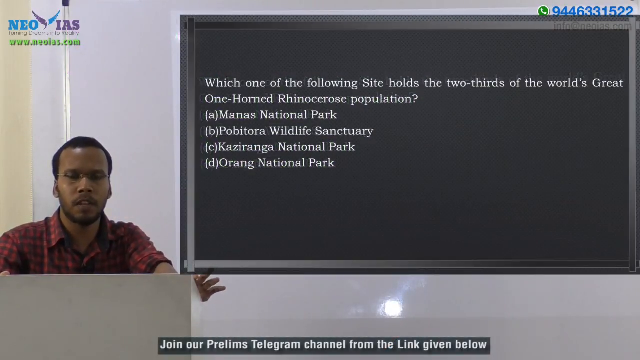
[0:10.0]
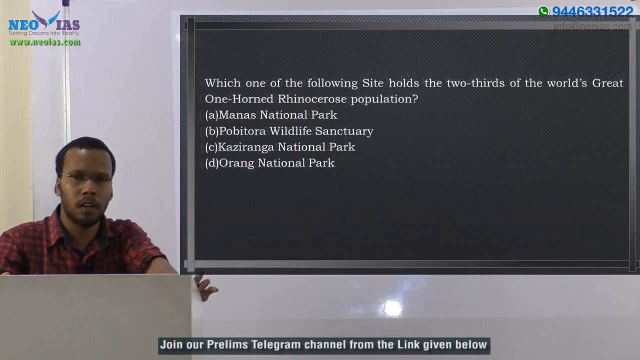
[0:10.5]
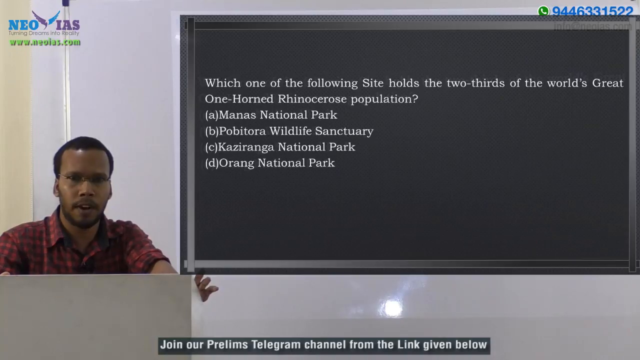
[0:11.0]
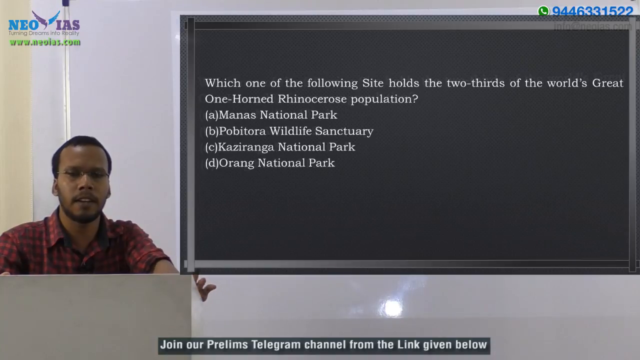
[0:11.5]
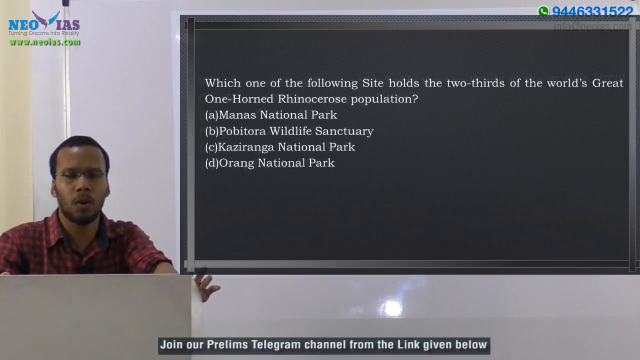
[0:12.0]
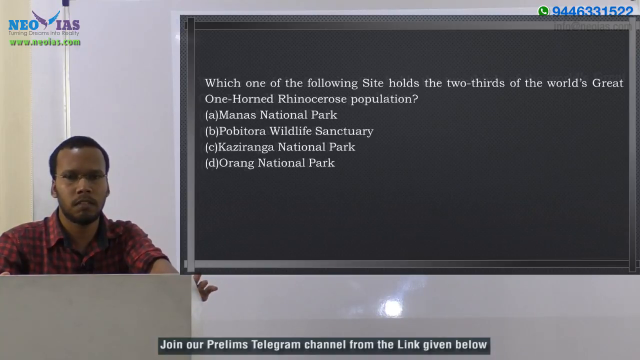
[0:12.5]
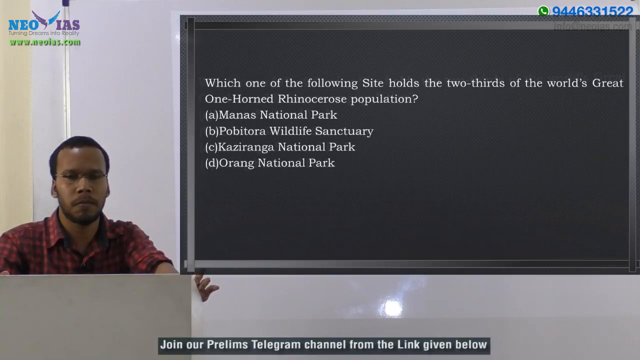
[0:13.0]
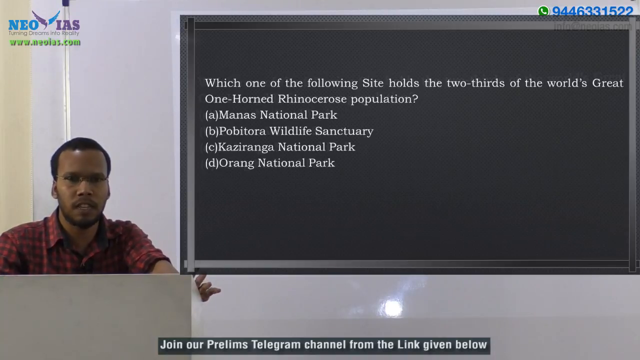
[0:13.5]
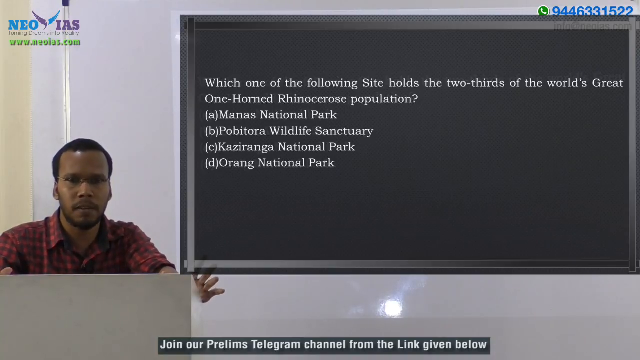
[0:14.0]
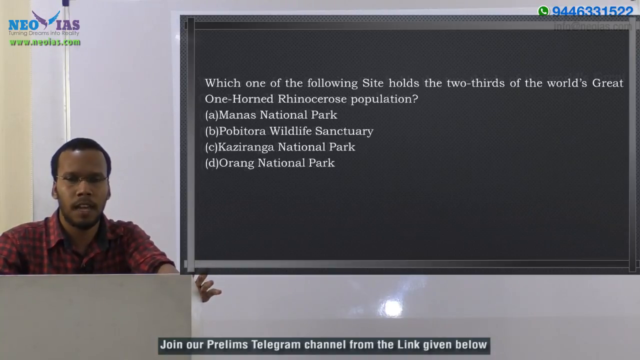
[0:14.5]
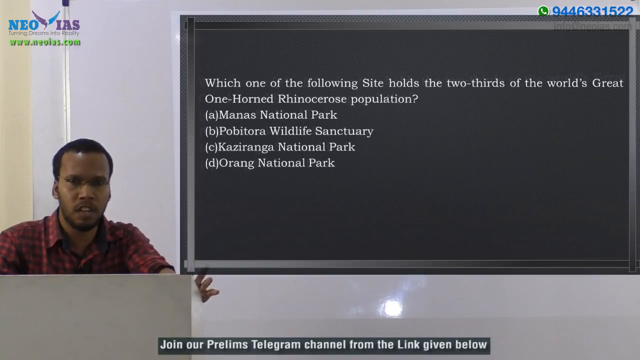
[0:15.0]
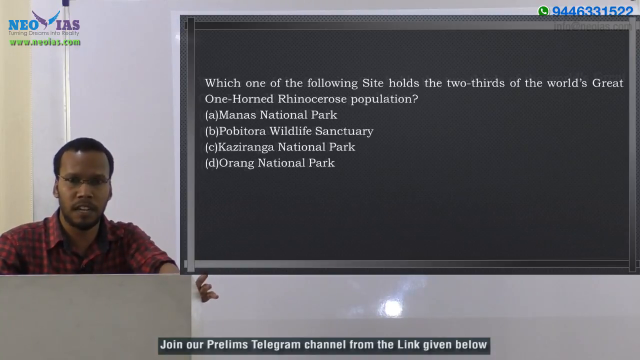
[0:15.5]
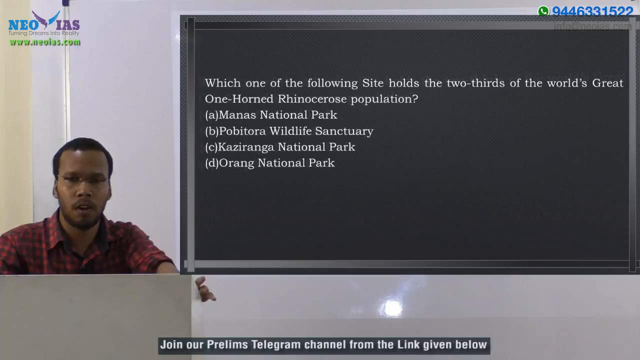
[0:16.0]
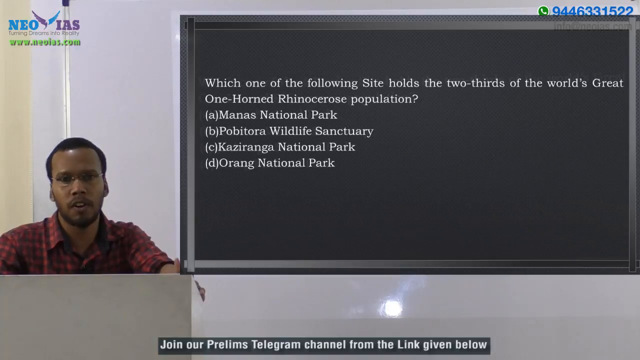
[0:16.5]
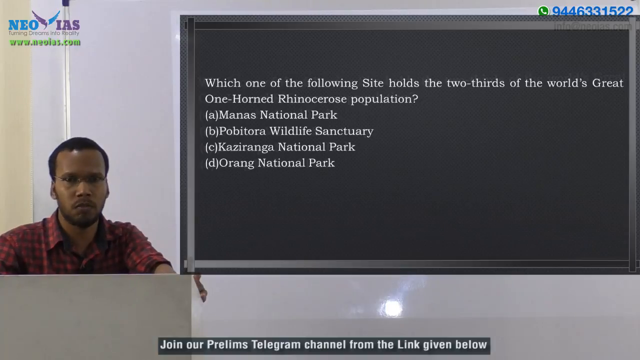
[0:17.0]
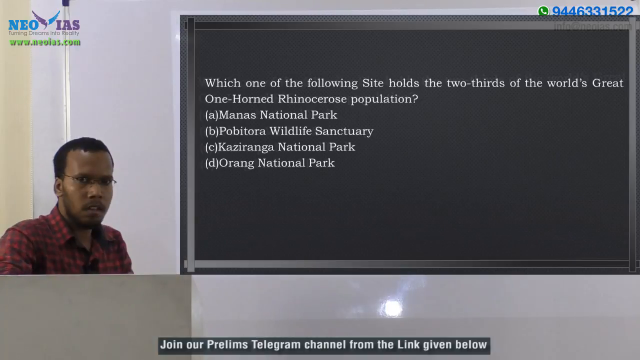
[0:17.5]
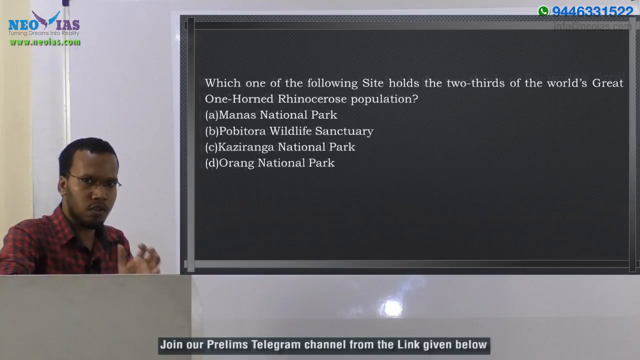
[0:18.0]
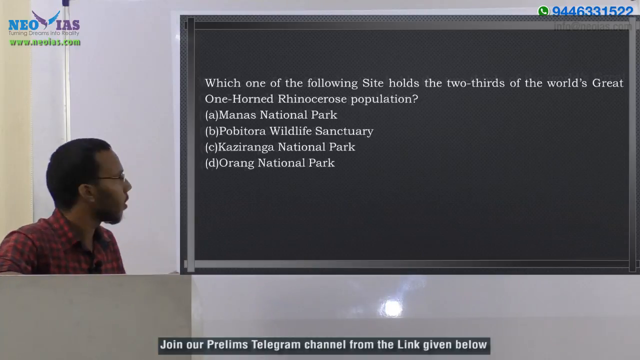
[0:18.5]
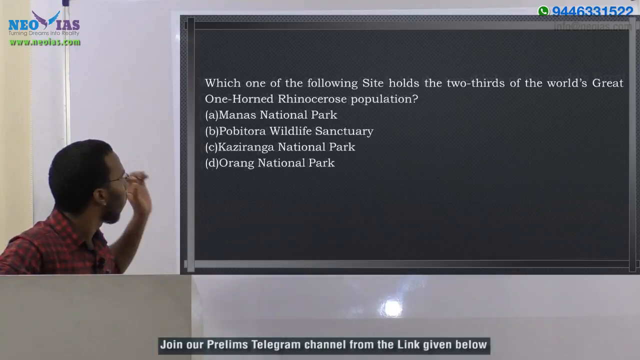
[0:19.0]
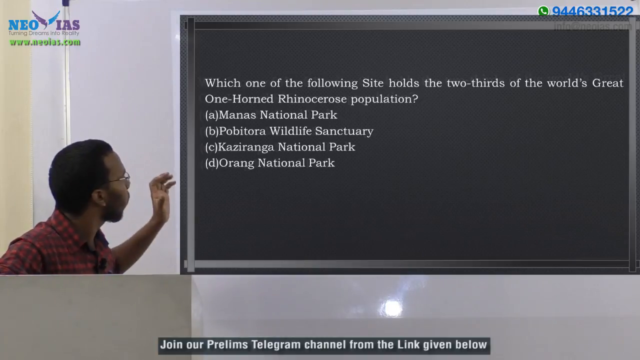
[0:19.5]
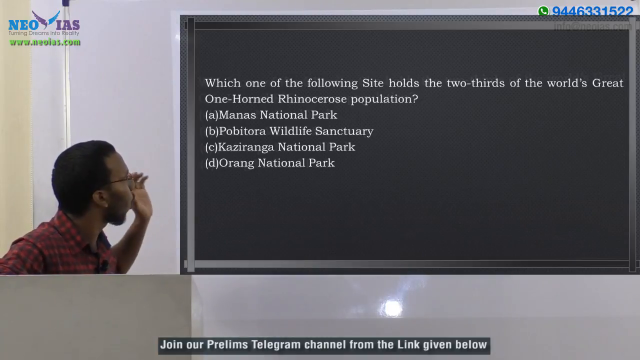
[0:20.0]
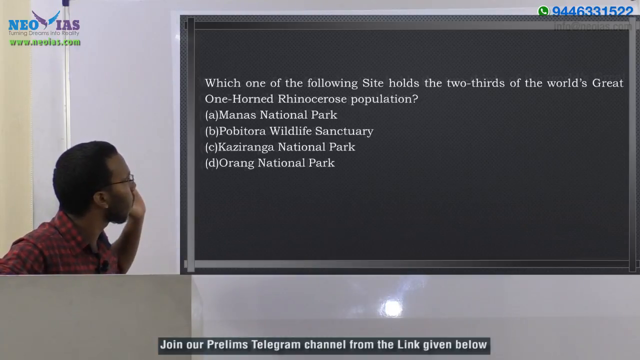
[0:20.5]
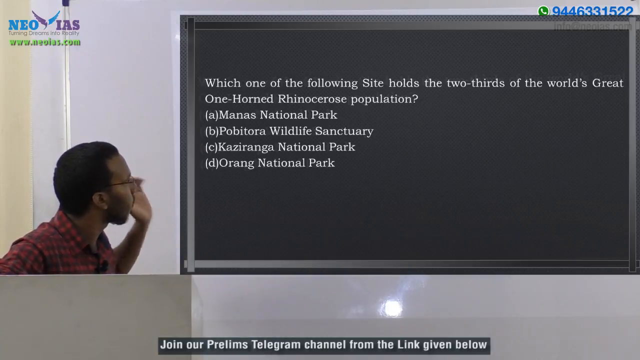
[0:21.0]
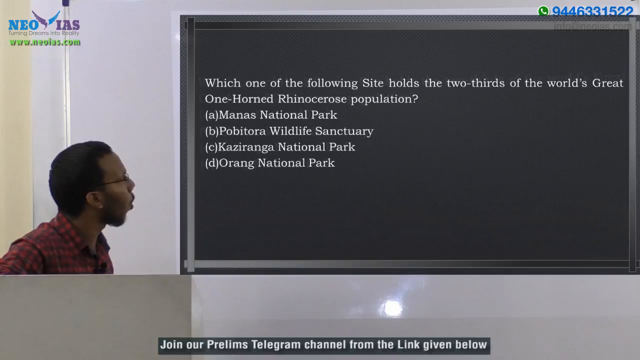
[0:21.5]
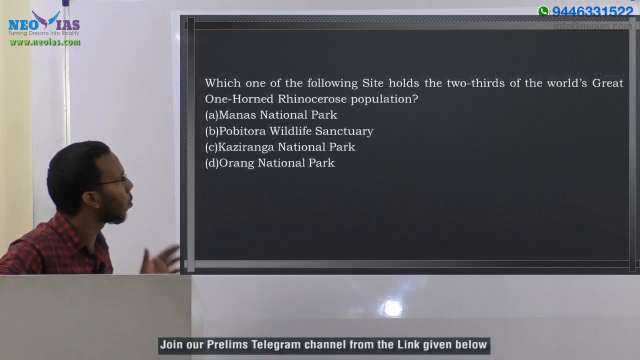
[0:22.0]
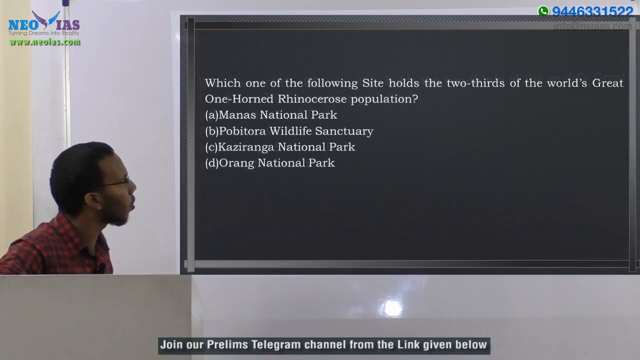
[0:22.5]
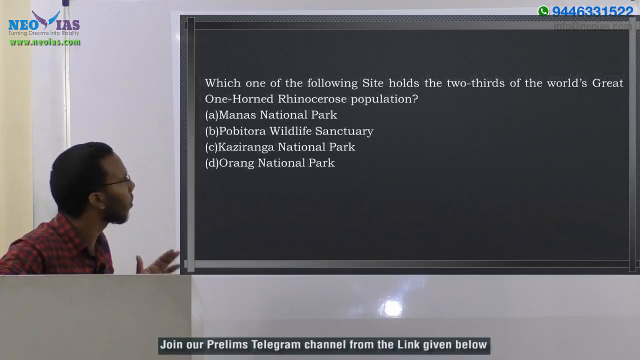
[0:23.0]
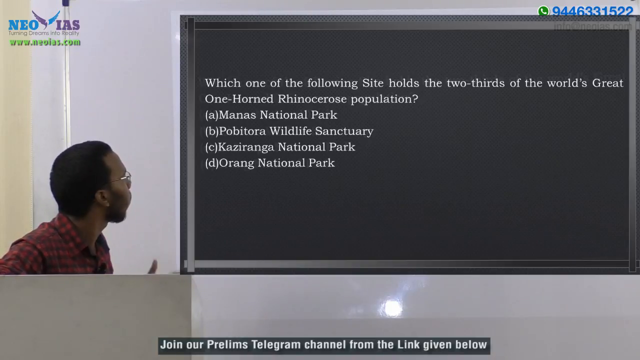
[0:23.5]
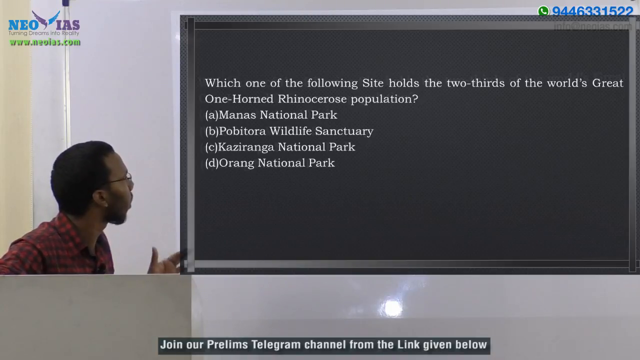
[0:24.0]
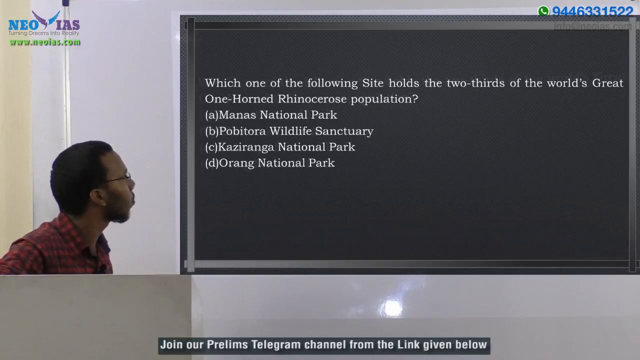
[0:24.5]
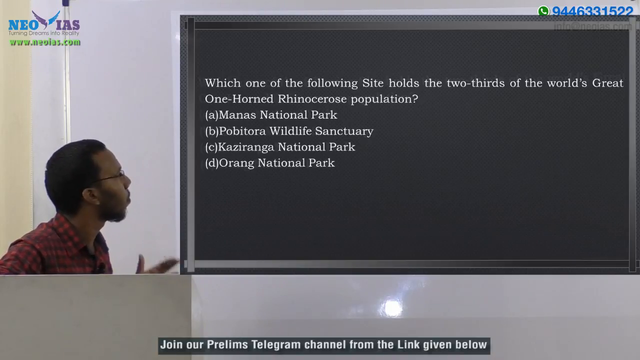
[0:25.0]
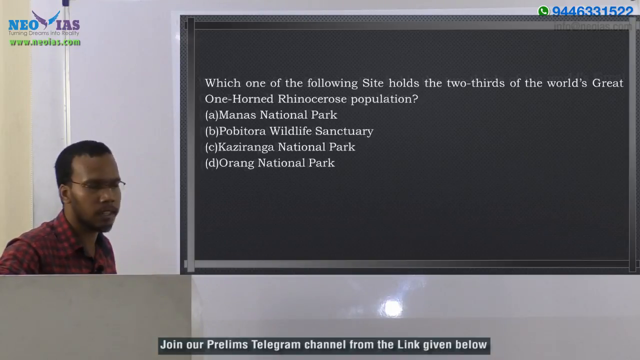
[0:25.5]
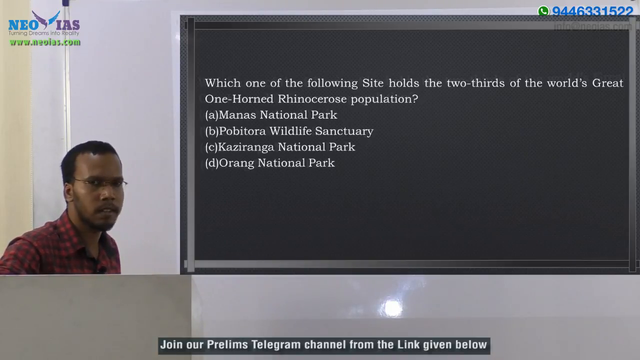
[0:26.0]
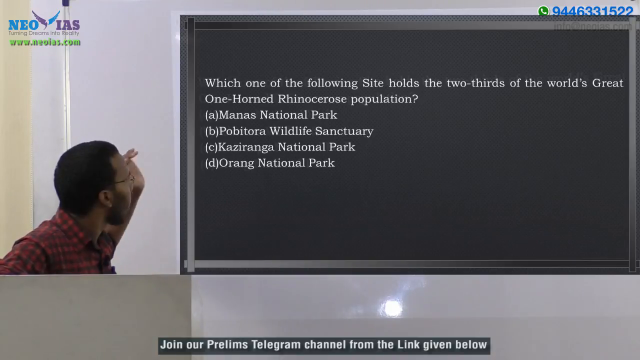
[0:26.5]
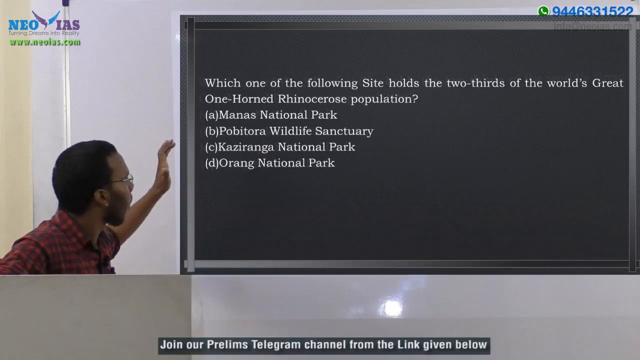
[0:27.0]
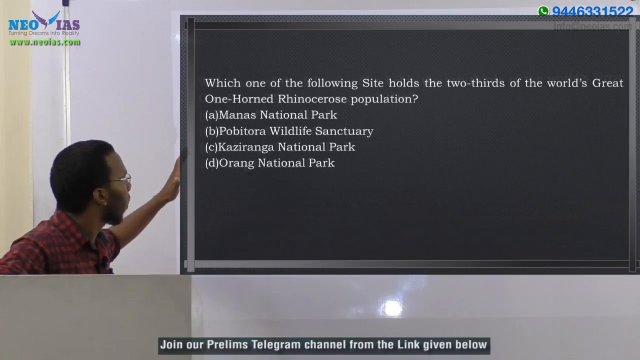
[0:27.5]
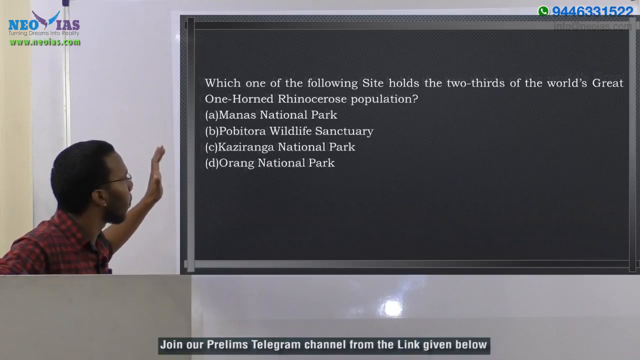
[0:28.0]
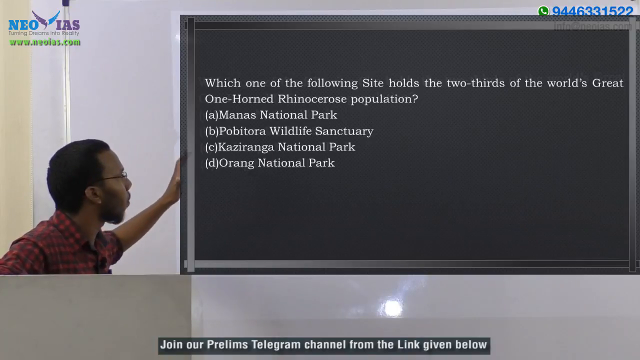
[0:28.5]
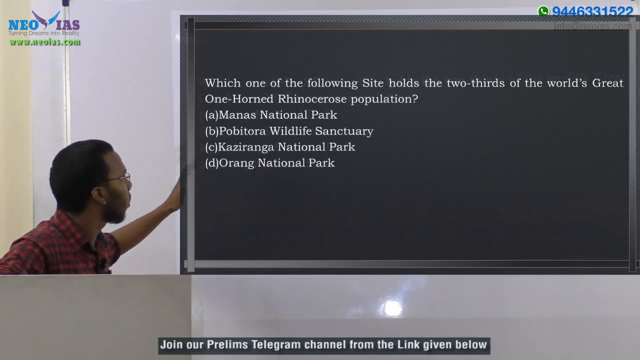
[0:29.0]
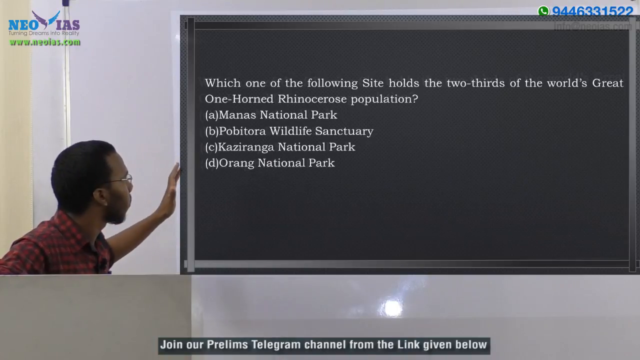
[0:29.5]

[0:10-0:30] A man in front of a computer talks to the camera on the left side of the screen, while on the right side of the screen there is a board with the information he is sharing. He talks directly to the camera, then turns and reads some information from the board, and keeps talking. He seems to be in a classroom or something similar. He is a young black man, apparently in his 20s or 30s, with short curly hair and a red t-shirt, and he is seated. The board is like a blackboard and holds information about the rhinoceros population in the national parks. In the right corner of the screen there is a phone number and a WhatsApp icon.